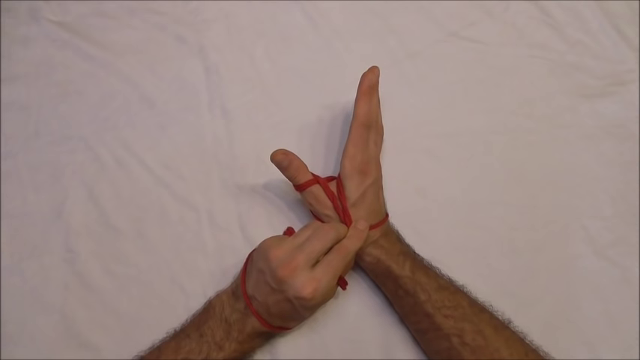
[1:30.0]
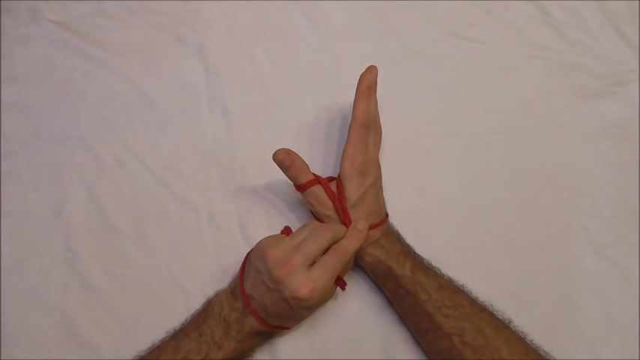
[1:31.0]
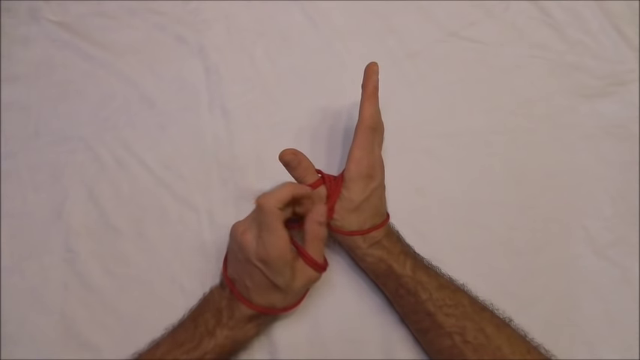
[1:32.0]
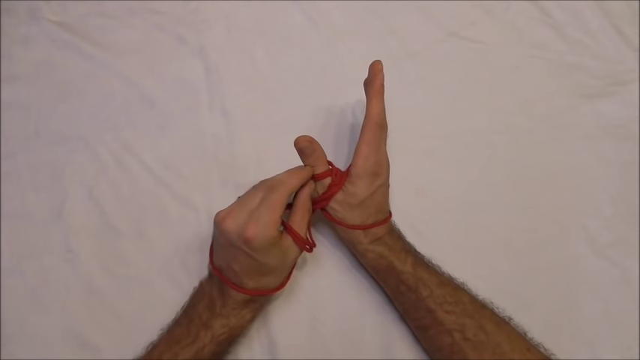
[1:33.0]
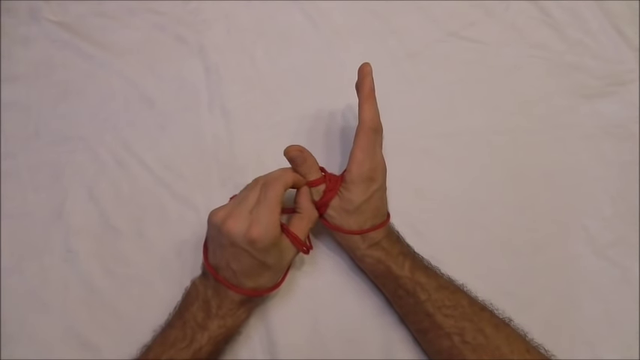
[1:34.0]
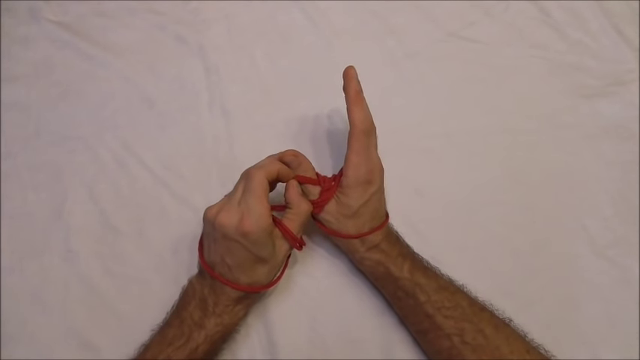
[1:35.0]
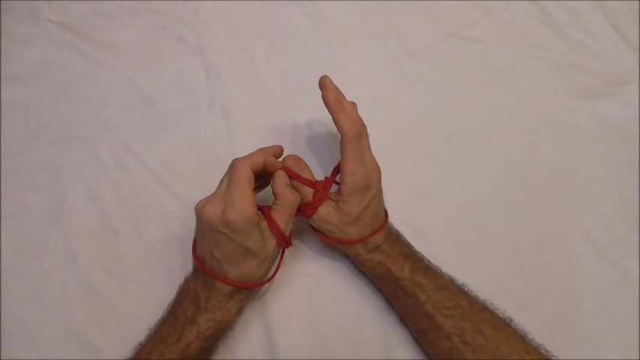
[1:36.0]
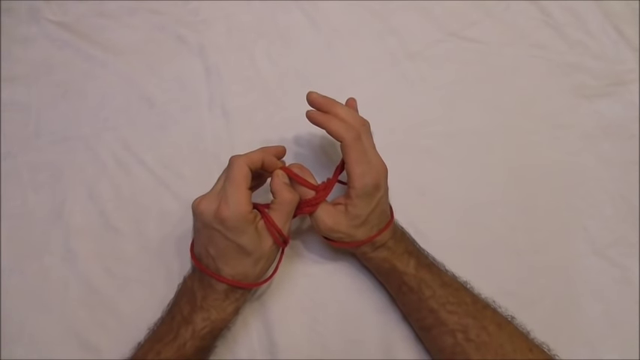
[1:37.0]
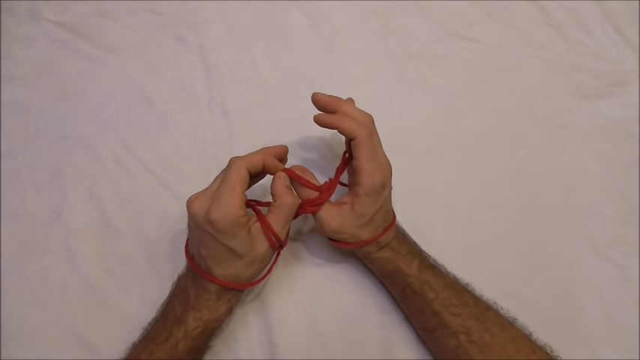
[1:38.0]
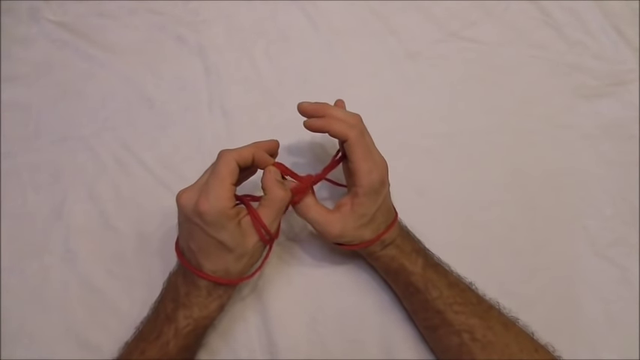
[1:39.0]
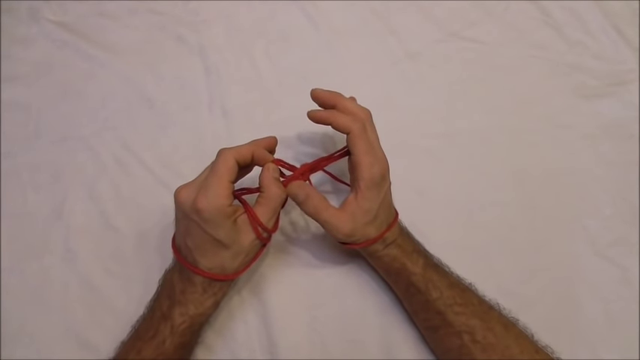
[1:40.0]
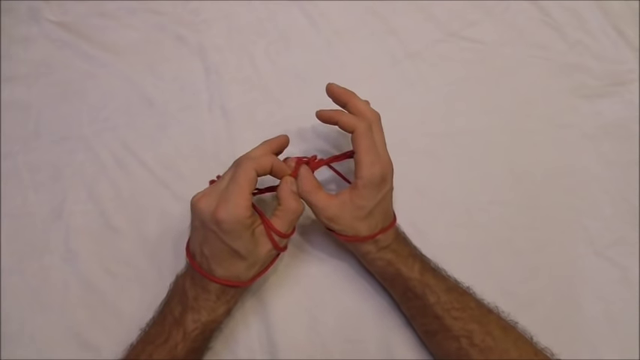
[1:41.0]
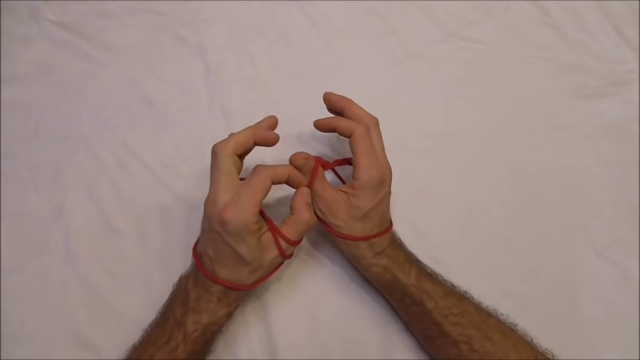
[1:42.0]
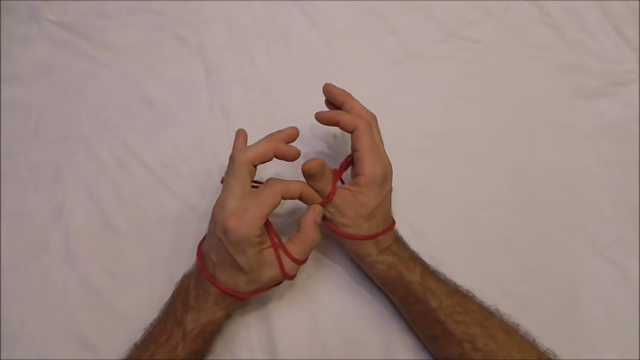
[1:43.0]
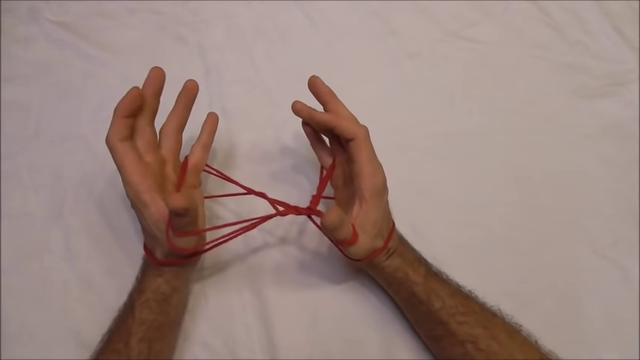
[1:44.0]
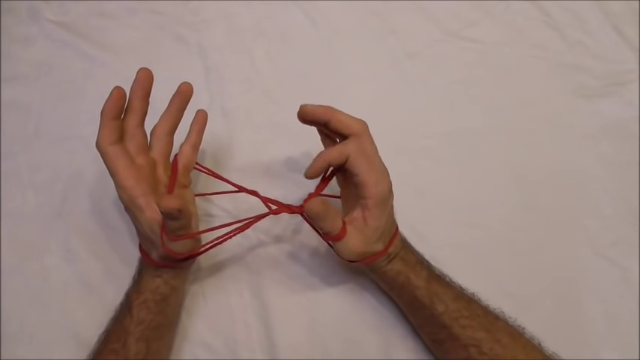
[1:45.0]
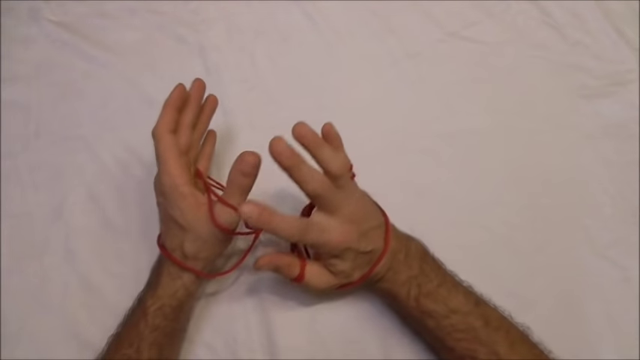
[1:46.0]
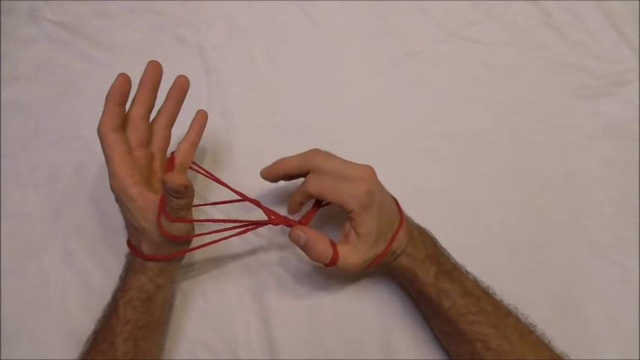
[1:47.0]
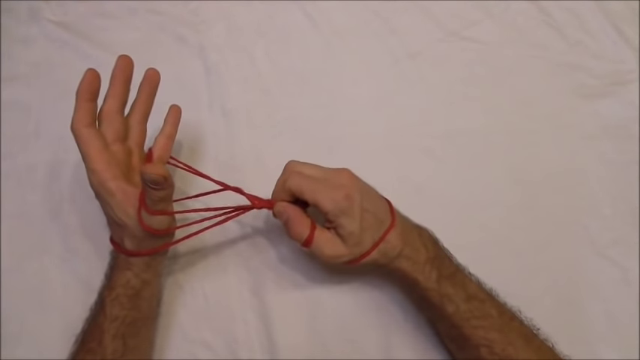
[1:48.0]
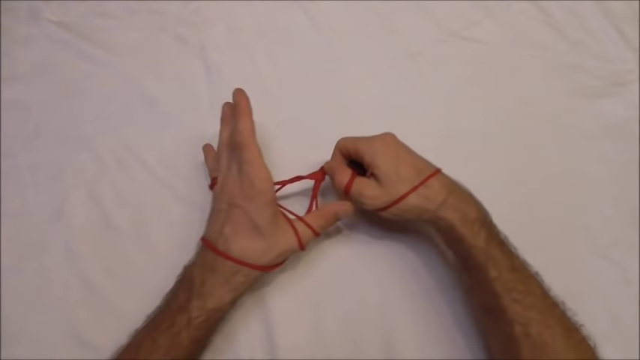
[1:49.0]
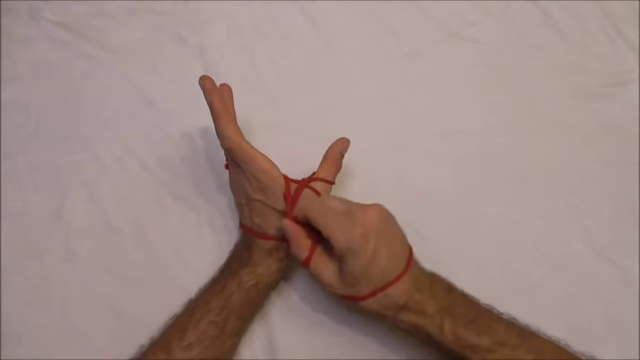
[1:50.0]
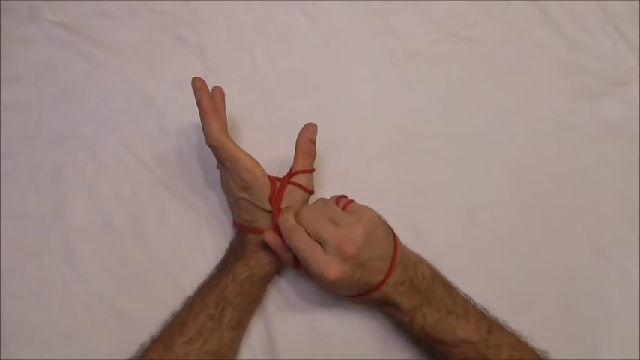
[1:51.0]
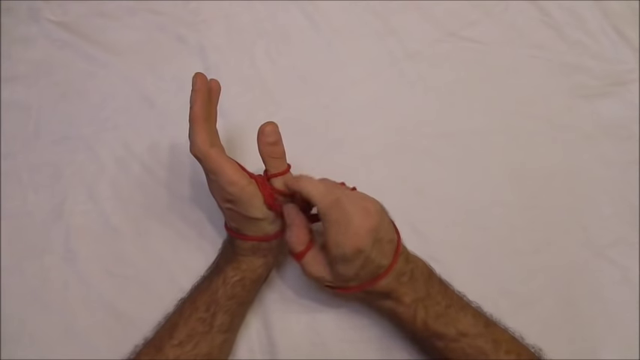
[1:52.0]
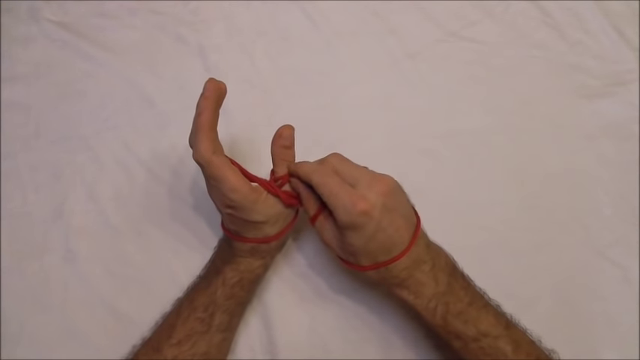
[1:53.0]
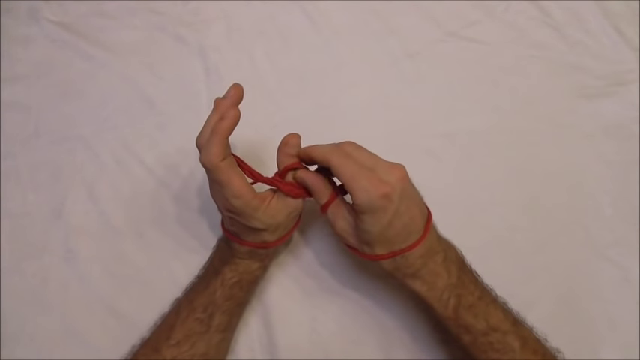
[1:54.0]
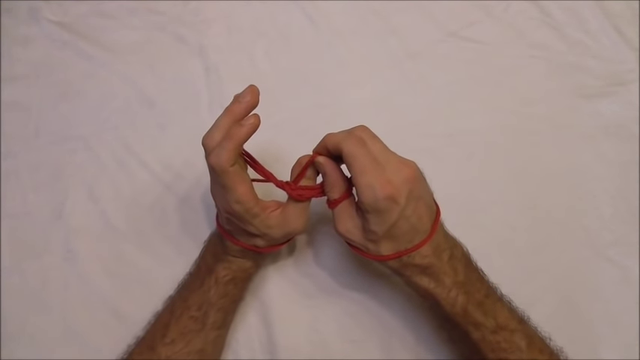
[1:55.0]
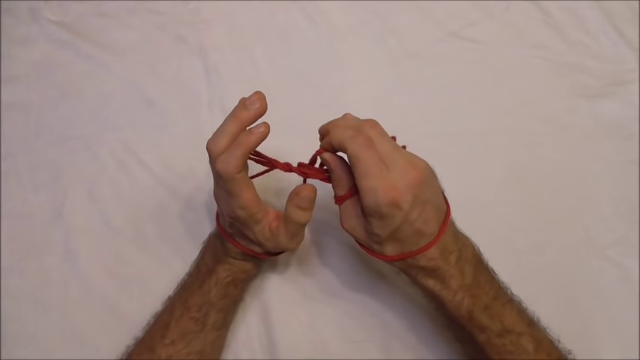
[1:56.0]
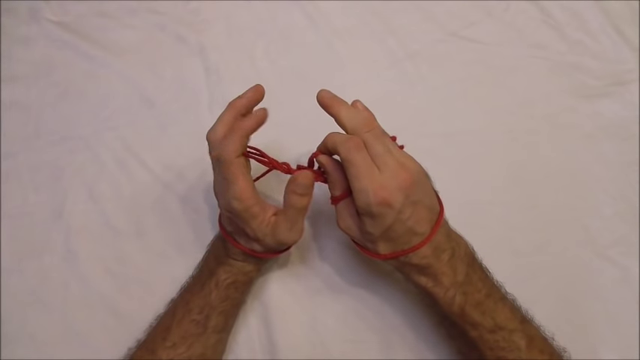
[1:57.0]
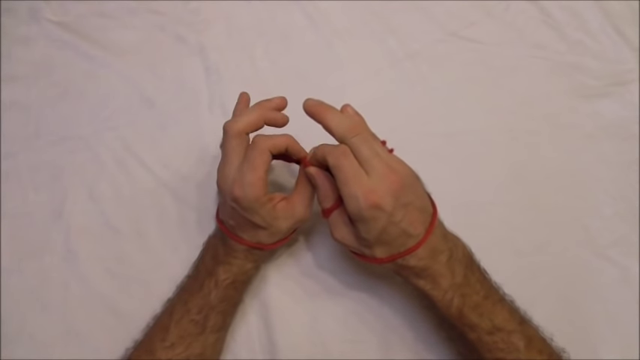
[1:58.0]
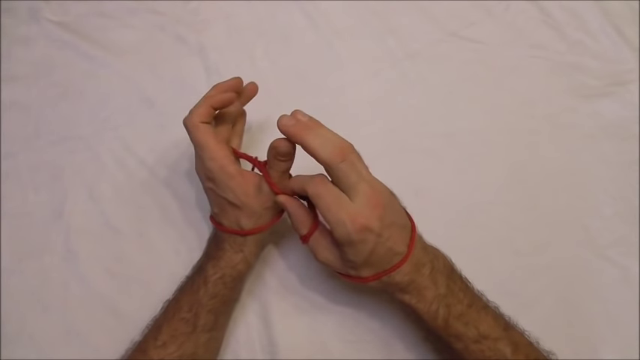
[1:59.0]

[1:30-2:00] Against the white linen background, the red string is wrapped around his wrist, inside his right palm, and a little in his left palm. He pulls at the tip of his right thumb, where a piece of the string is, and pulls it over his thumb, then reinserts his thumb into a different, opened area of the red string. He opens his palms again to reveal a pattern between his left and right hands. He points at his left thumb with his right pointer finger, grabs the middle of the red pattern, and wraps it between his left hand where his thumb is. He then does the same process on his left thumb that he did with his right thumb, pulling out of a hole and inserting it back into a hole in the pattern.